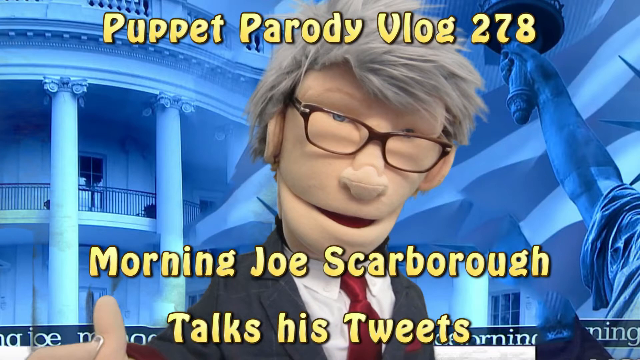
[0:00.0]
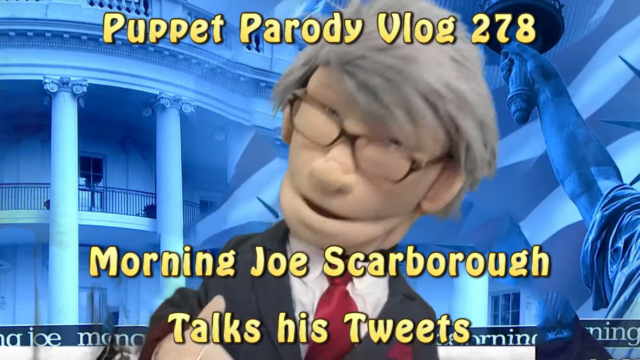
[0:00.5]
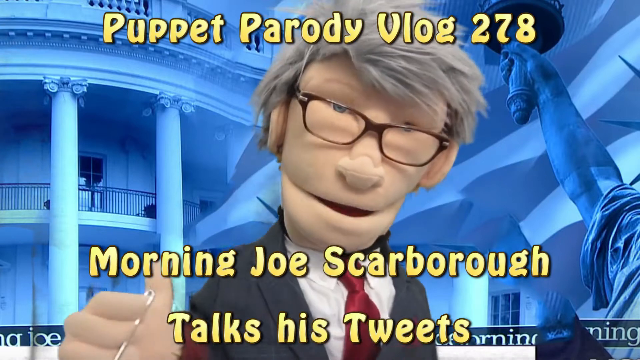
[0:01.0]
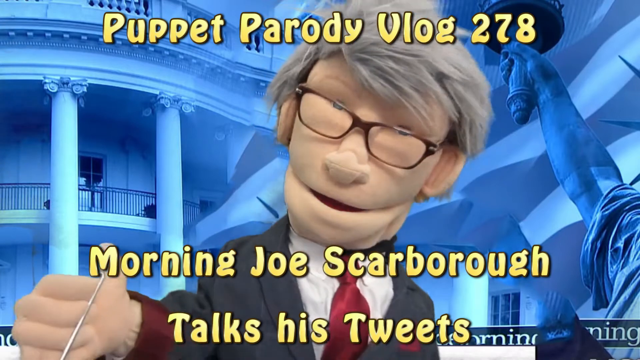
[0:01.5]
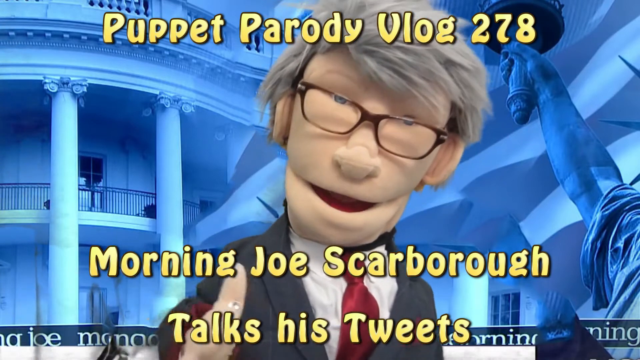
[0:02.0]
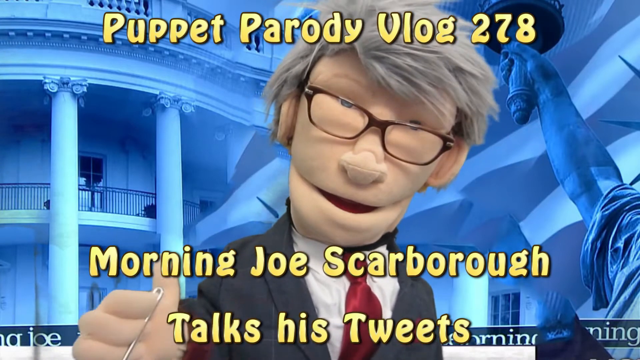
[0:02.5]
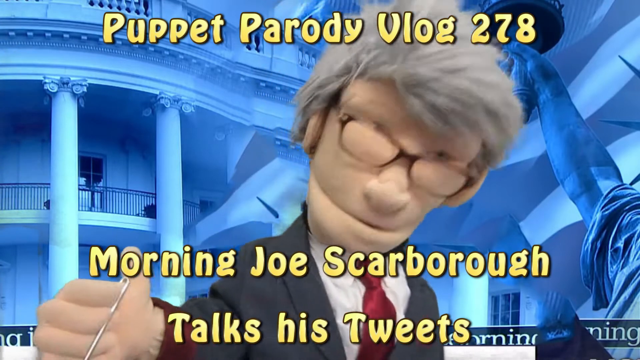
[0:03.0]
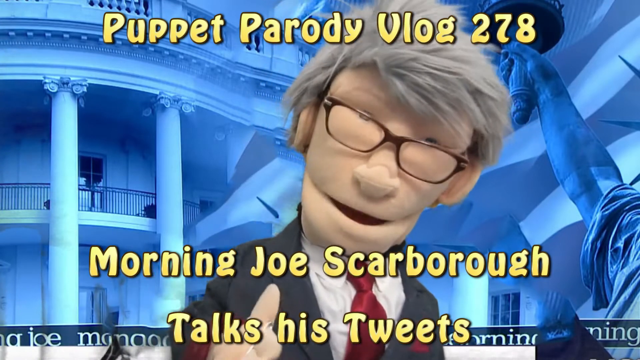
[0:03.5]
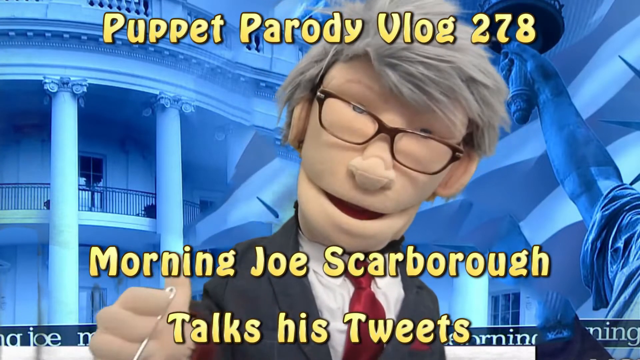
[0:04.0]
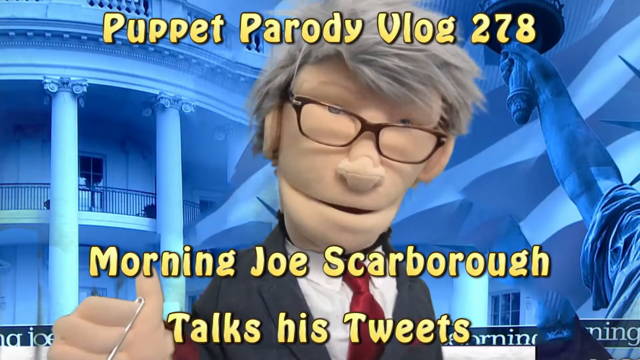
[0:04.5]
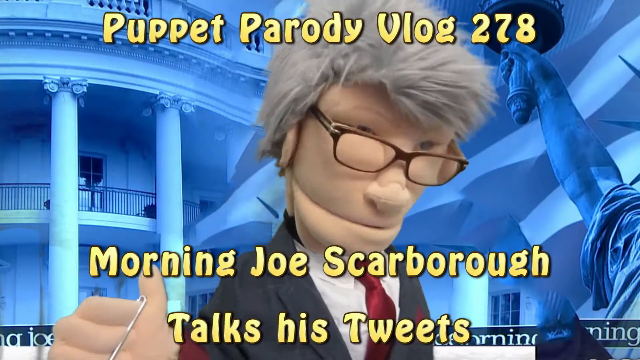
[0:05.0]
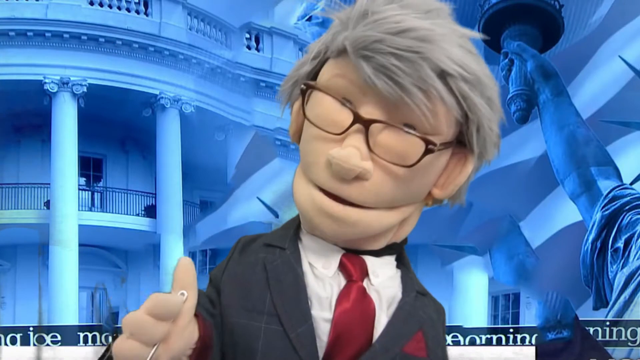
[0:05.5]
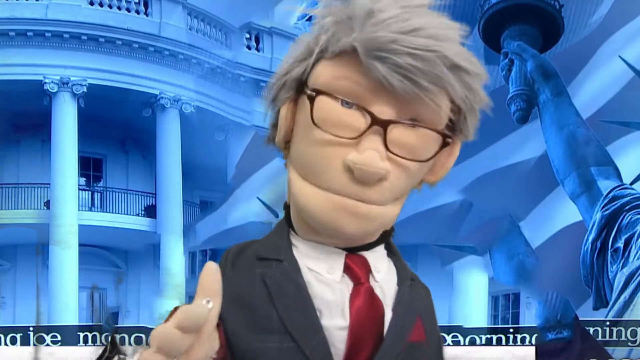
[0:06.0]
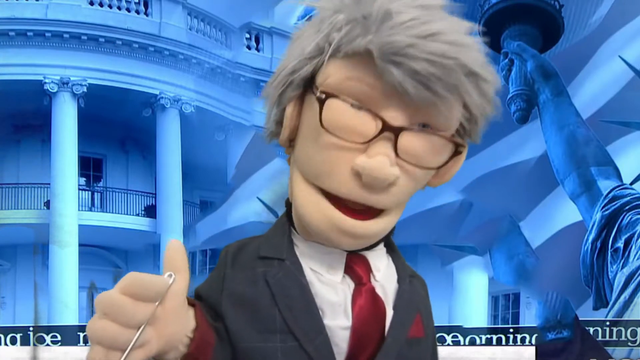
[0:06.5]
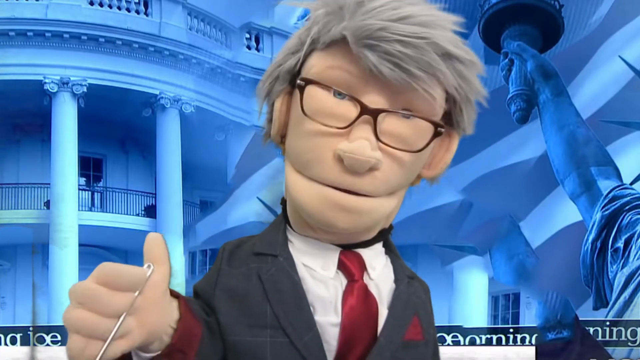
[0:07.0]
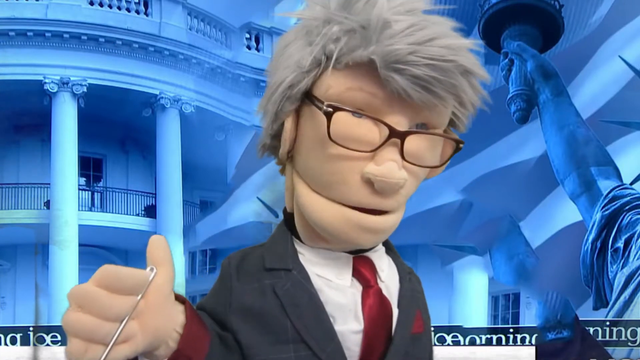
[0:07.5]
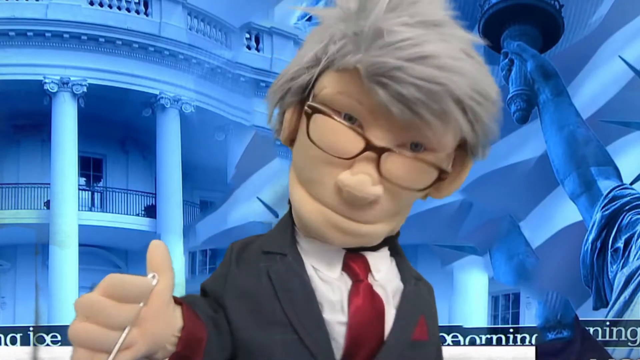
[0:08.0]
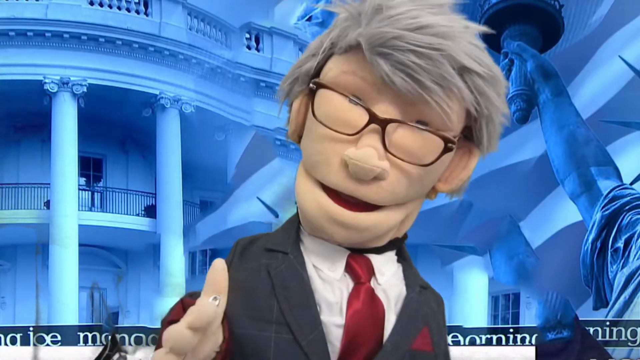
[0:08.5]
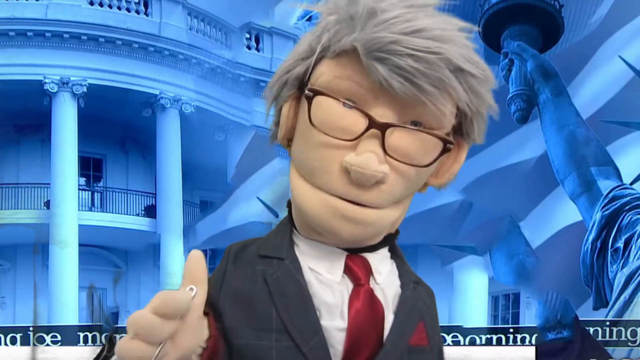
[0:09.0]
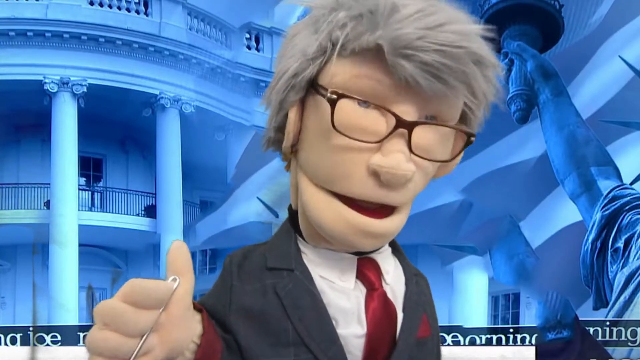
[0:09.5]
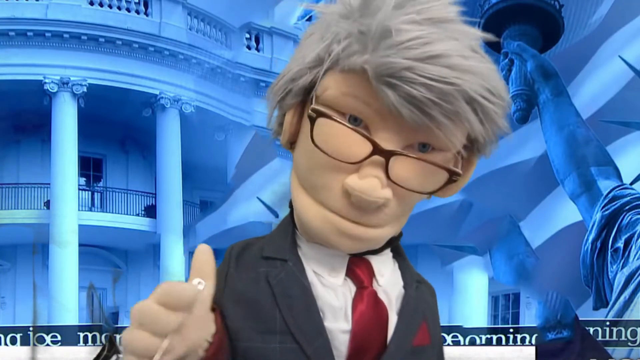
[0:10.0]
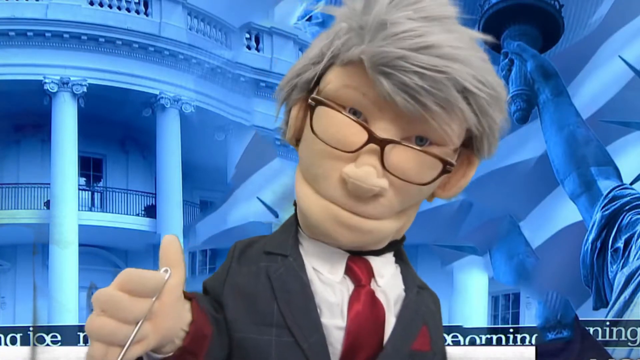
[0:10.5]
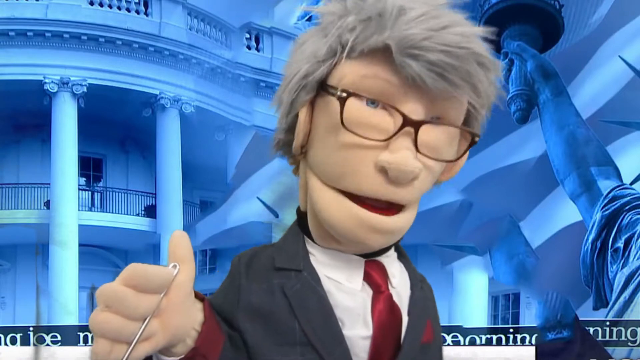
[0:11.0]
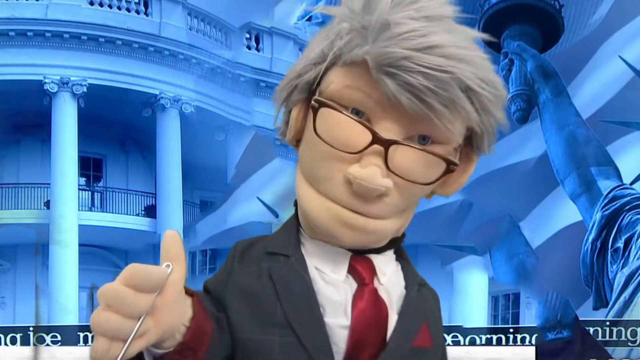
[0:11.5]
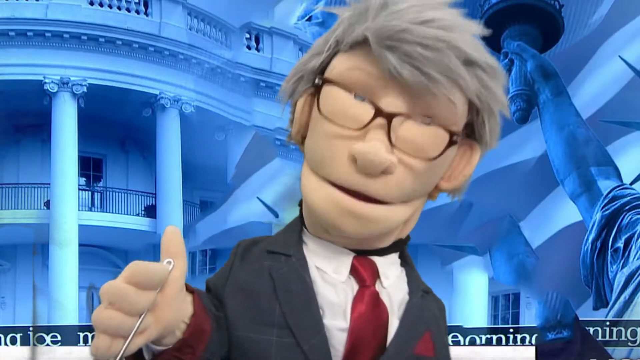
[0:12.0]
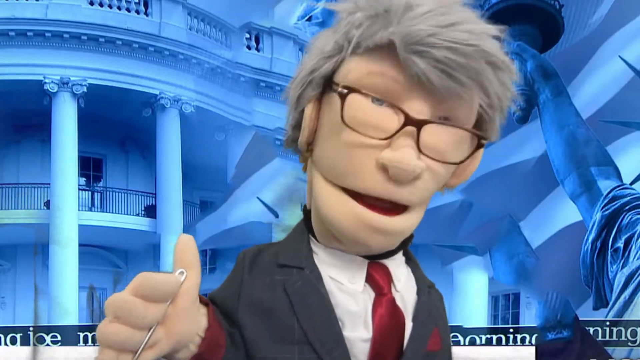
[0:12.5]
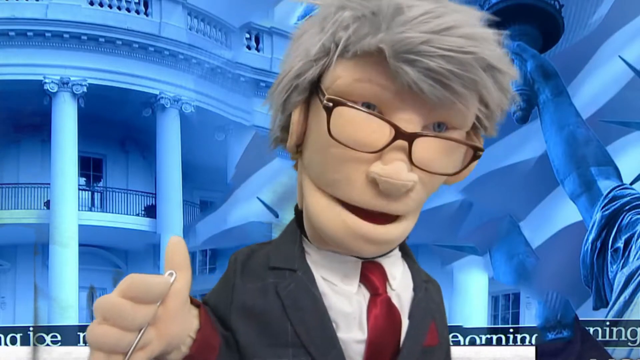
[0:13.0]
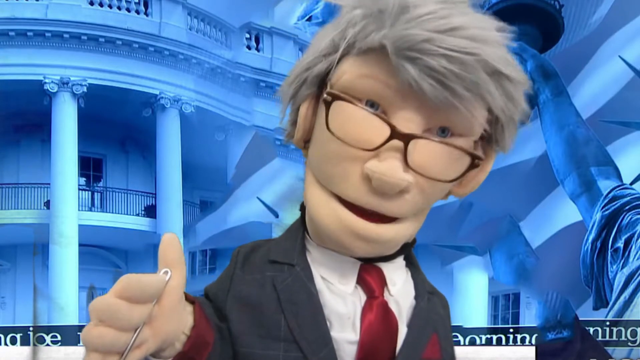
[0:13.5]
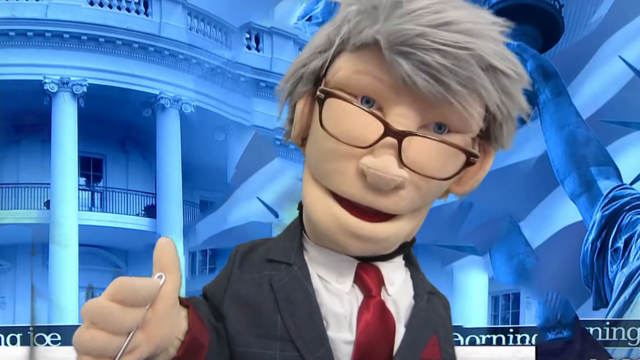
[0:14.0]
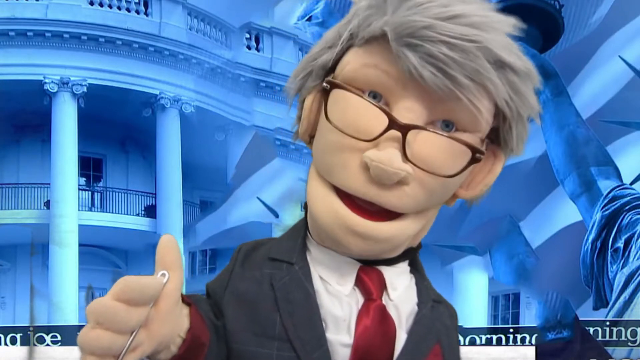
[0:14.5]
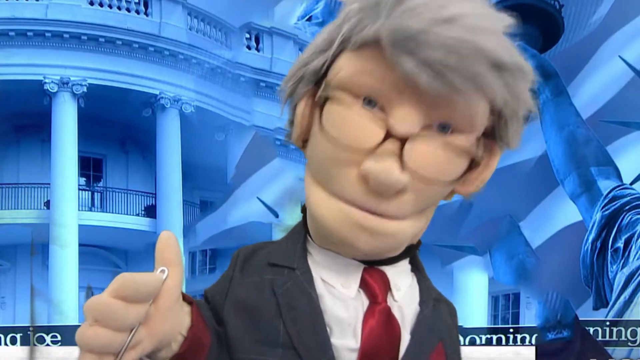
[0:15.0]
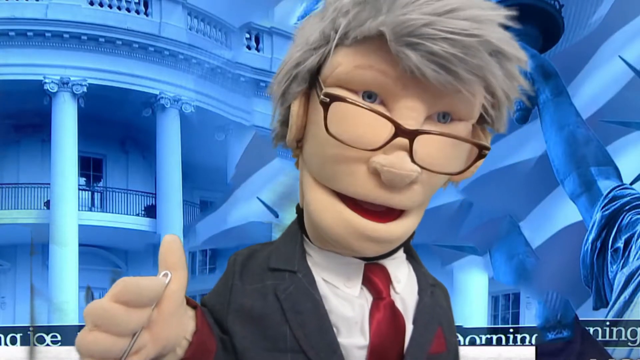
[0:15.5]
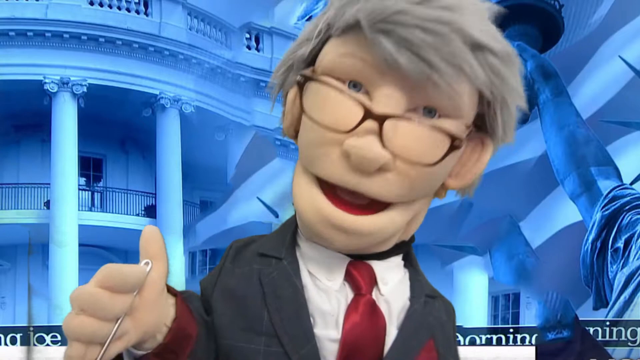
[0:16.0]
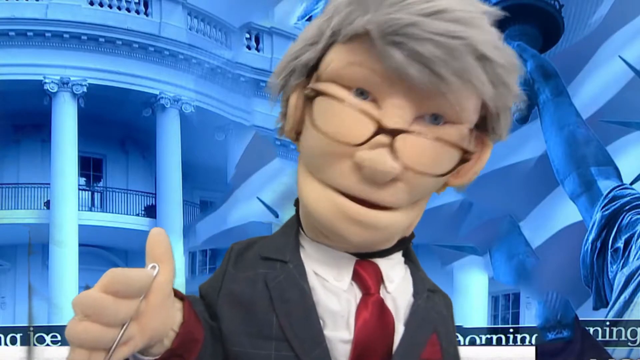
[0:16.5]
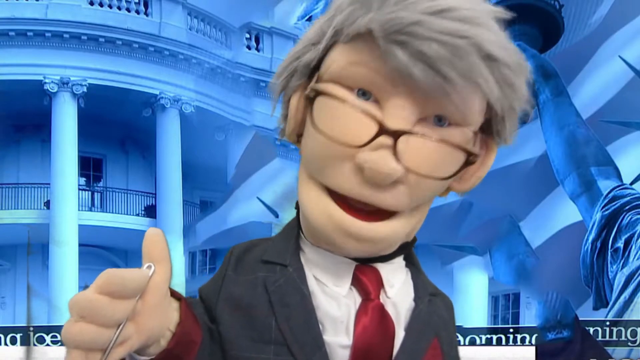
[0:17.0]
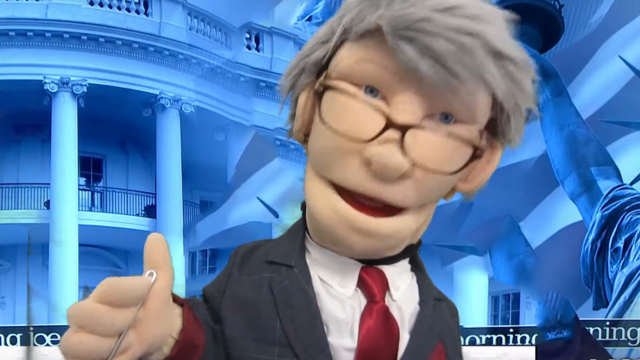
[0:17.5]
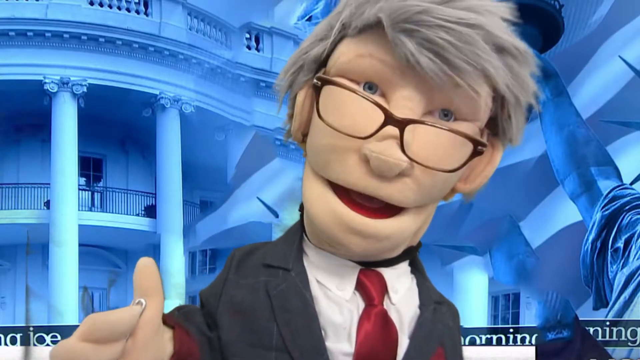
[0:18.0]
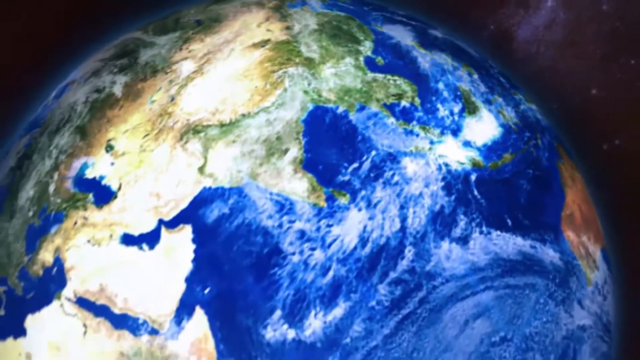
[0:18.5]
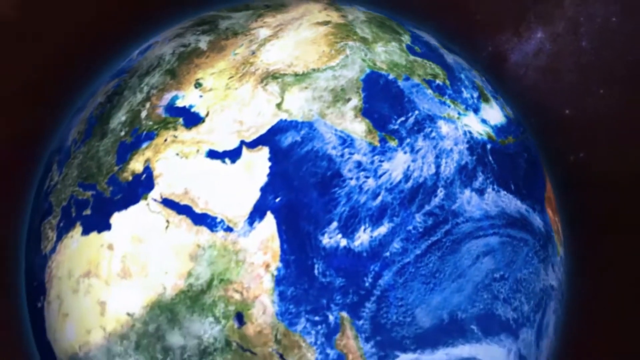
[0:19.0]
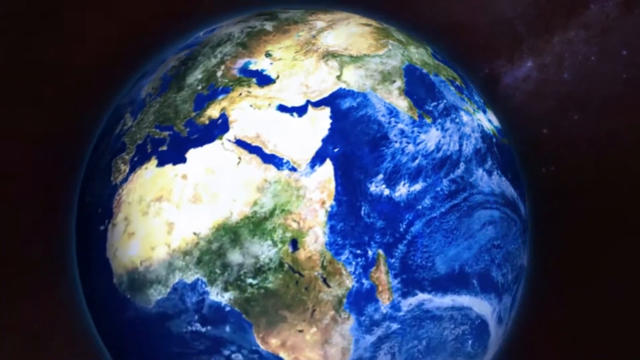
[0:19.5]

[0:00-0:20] A Muppet talks directly to the audience. On-screen text reads "Joe Scarborough" and then "Morning Joe Scarborough talks, tweets." The Muppet, who appears to be a very serious type, wears glasses and talks directly to the screen, with the logo of the Morning Joe show in the background. The scene then transitions to a realistic globe spinning on its axis behind the Muppet, and the text "Vlog 2017" also appears on the screen.